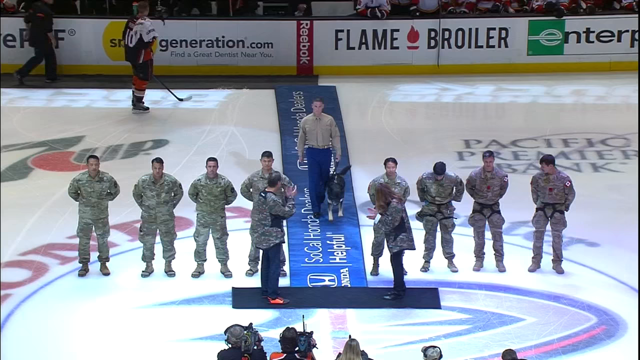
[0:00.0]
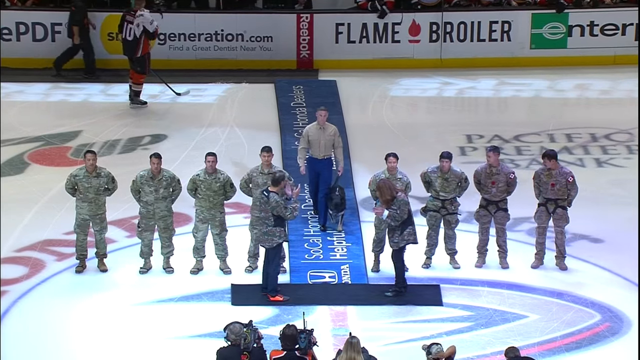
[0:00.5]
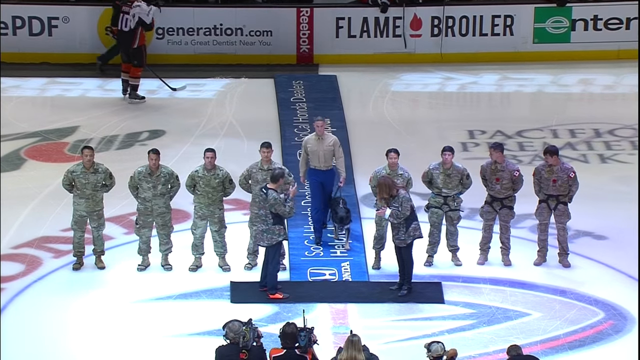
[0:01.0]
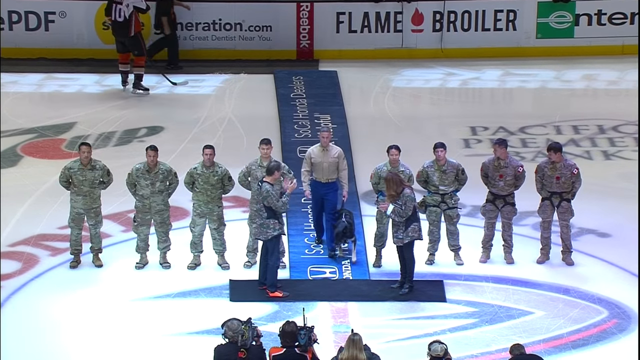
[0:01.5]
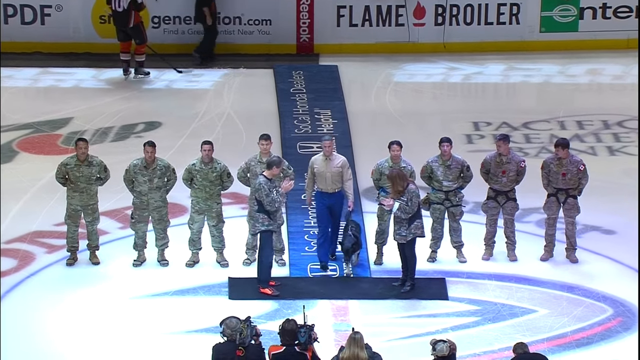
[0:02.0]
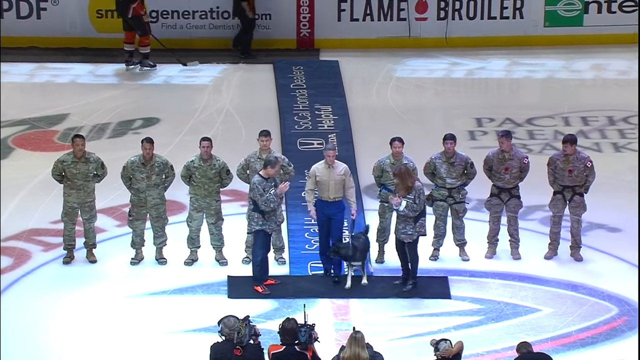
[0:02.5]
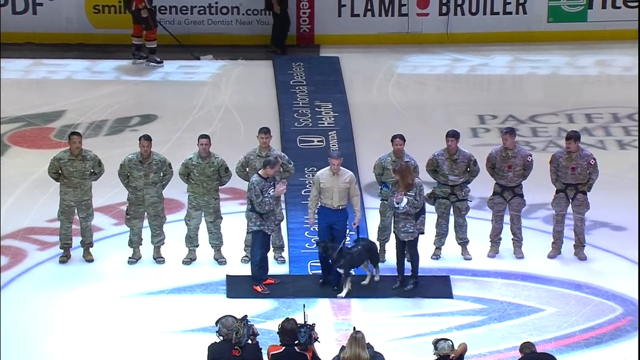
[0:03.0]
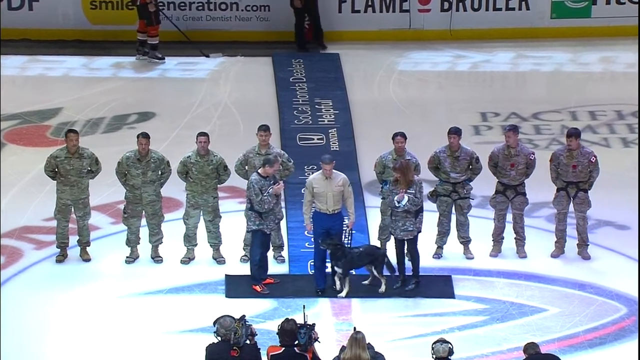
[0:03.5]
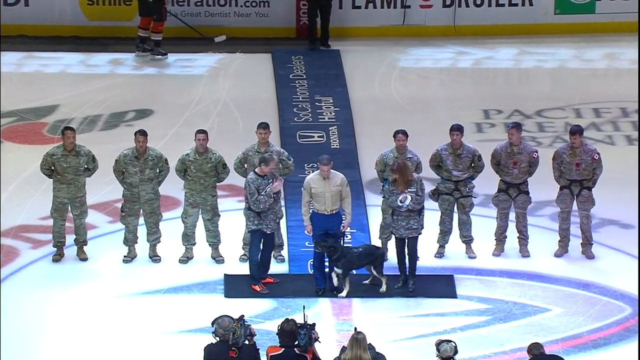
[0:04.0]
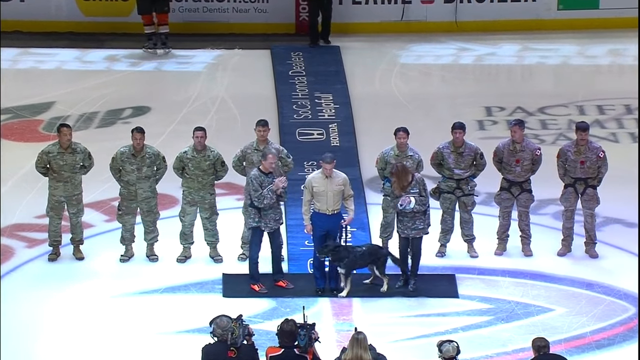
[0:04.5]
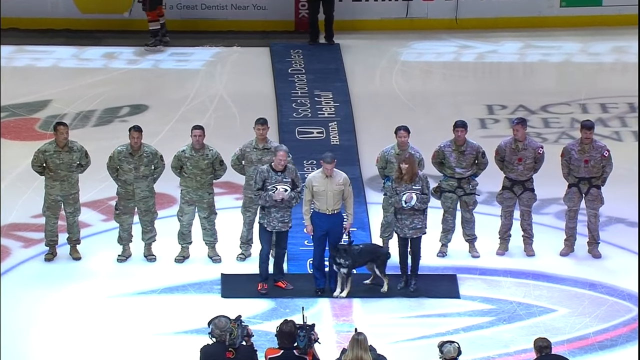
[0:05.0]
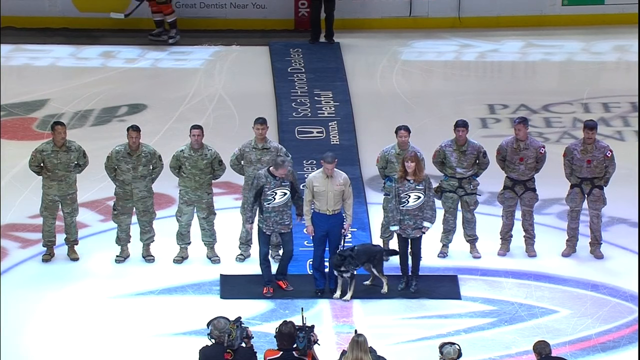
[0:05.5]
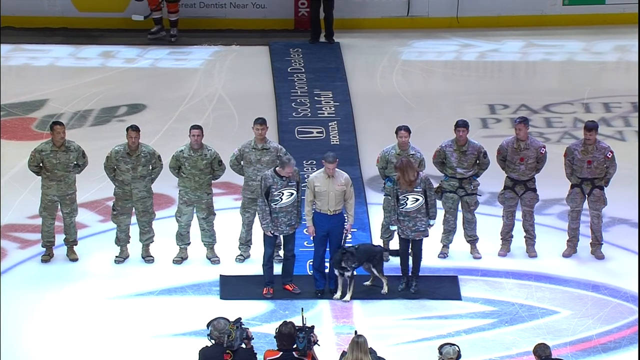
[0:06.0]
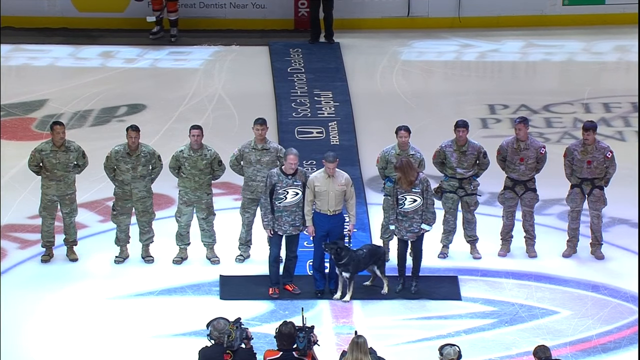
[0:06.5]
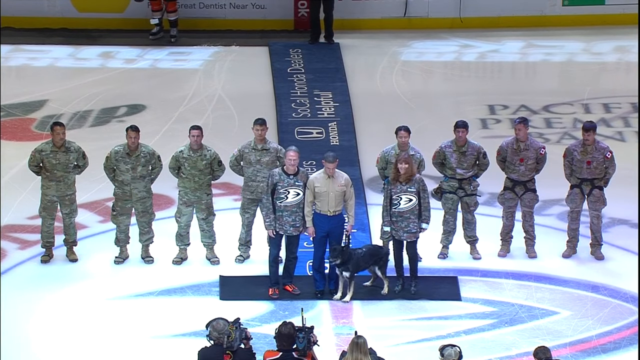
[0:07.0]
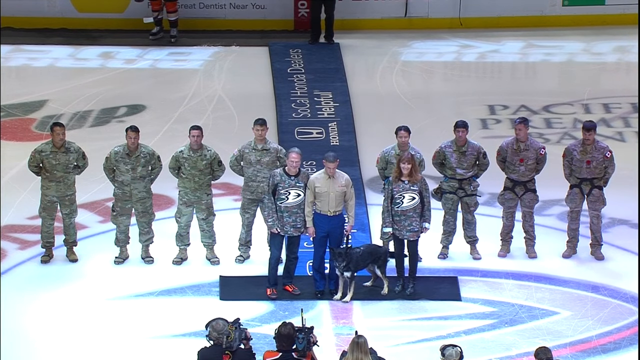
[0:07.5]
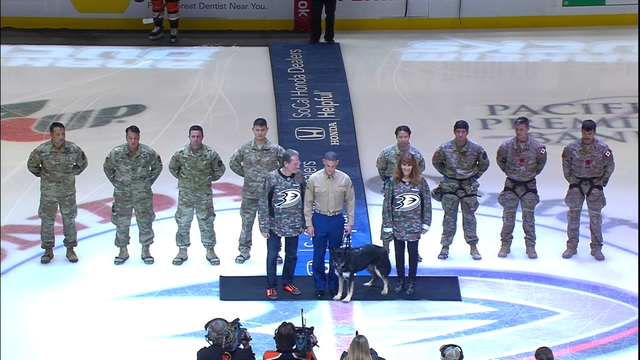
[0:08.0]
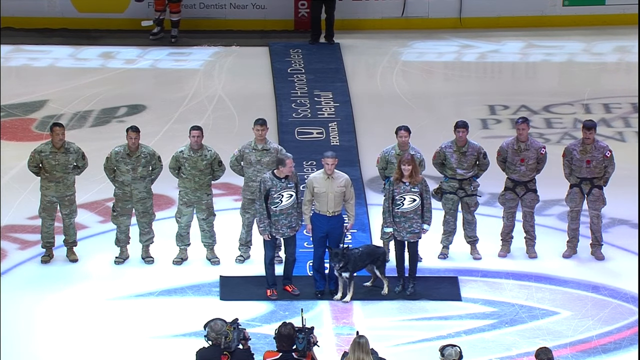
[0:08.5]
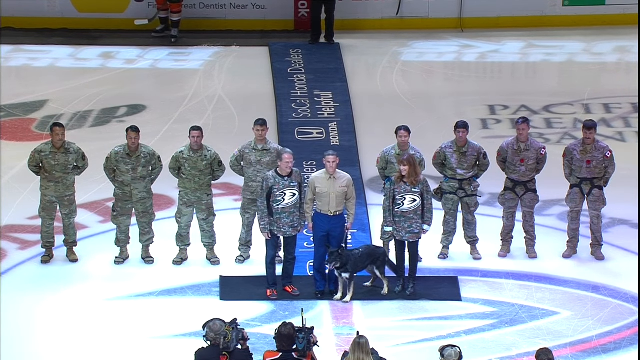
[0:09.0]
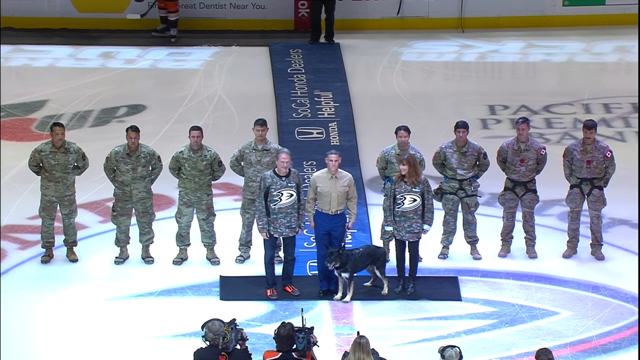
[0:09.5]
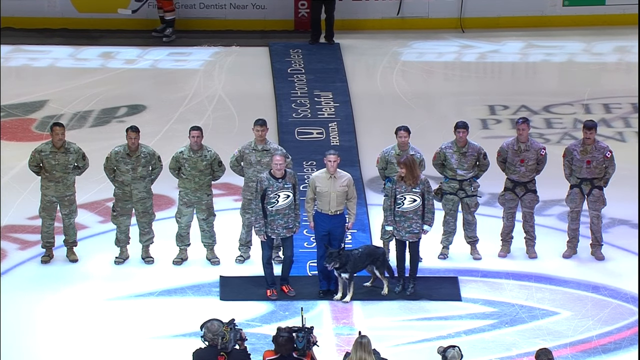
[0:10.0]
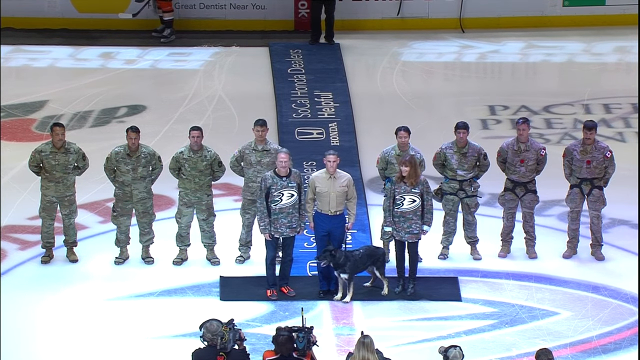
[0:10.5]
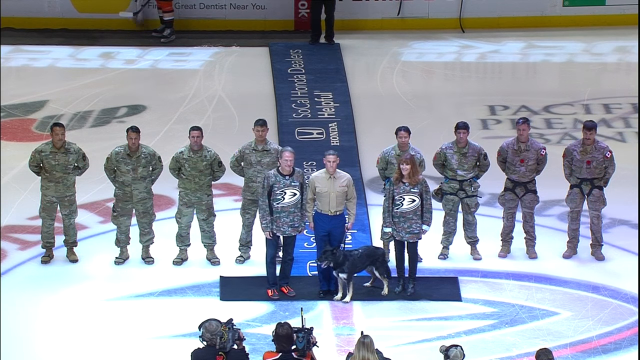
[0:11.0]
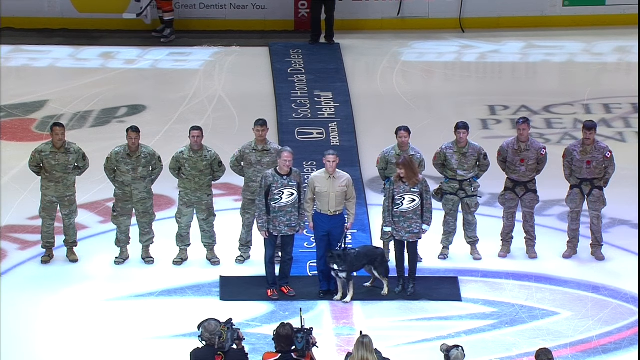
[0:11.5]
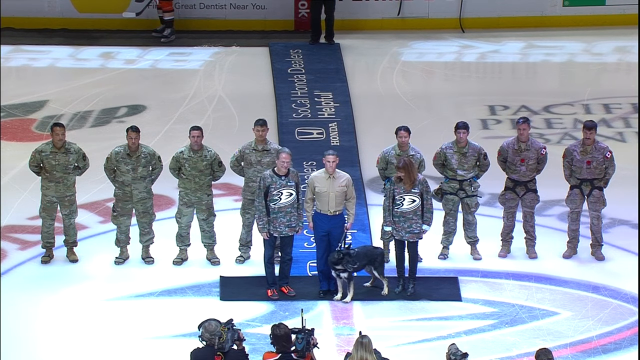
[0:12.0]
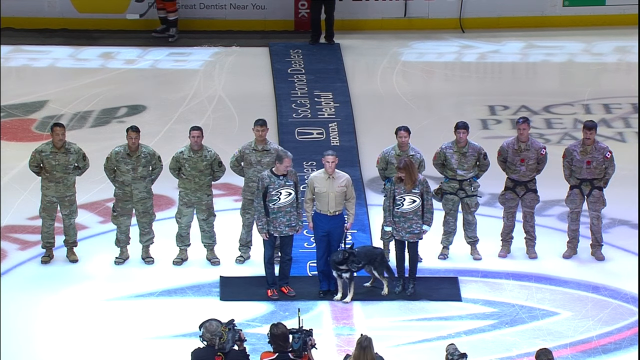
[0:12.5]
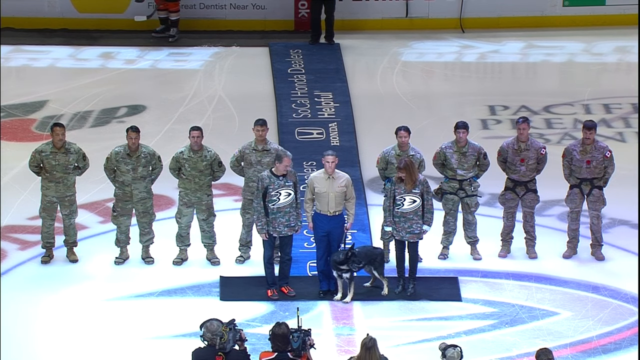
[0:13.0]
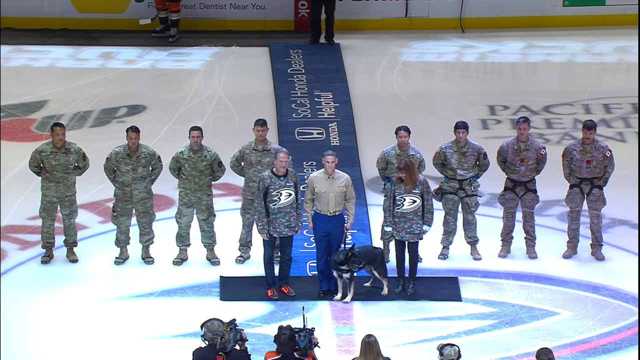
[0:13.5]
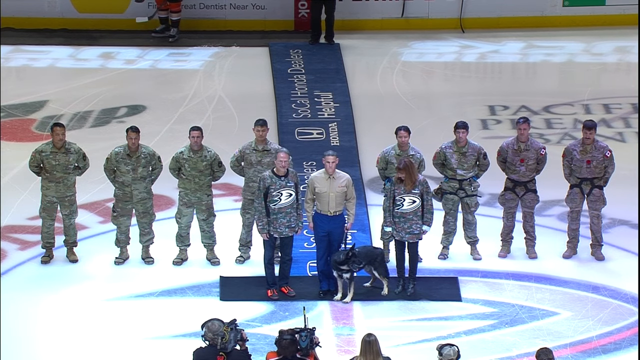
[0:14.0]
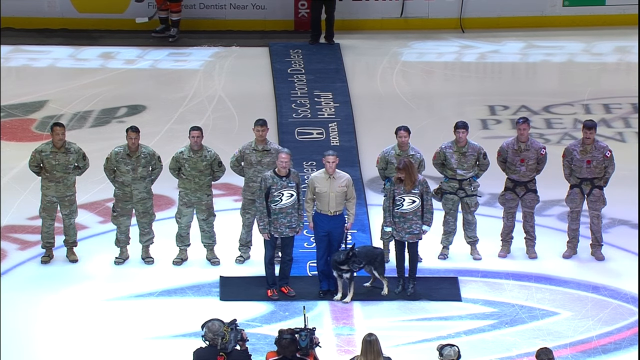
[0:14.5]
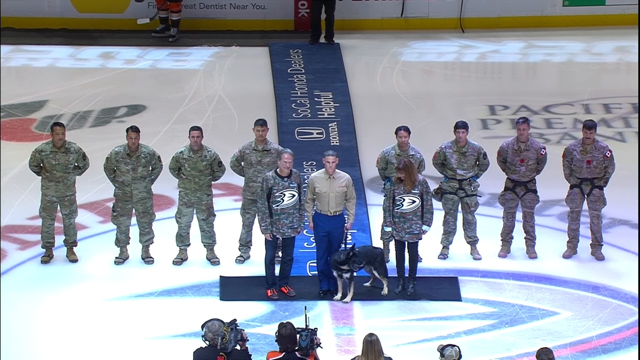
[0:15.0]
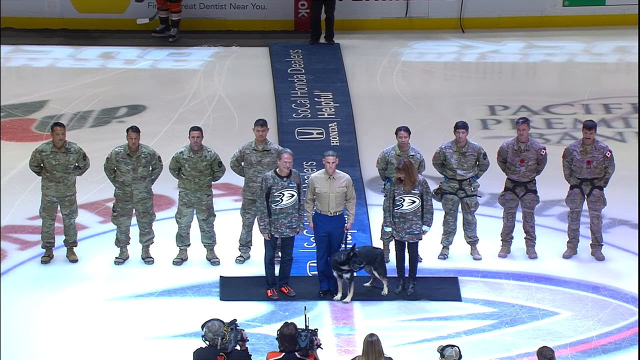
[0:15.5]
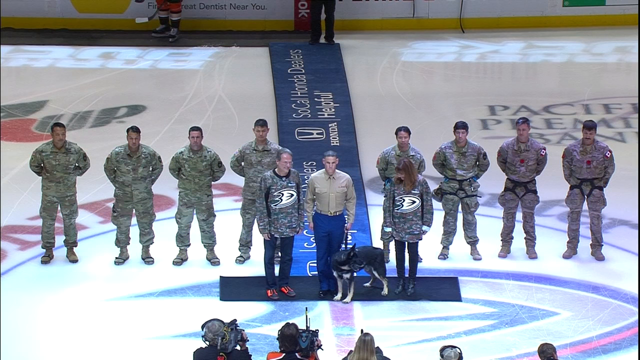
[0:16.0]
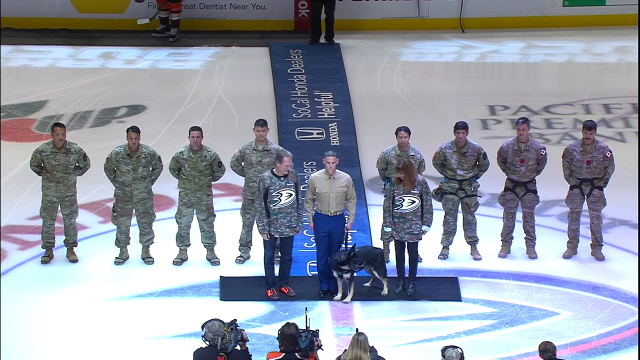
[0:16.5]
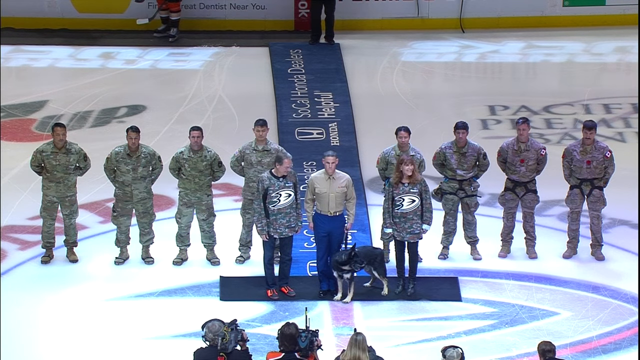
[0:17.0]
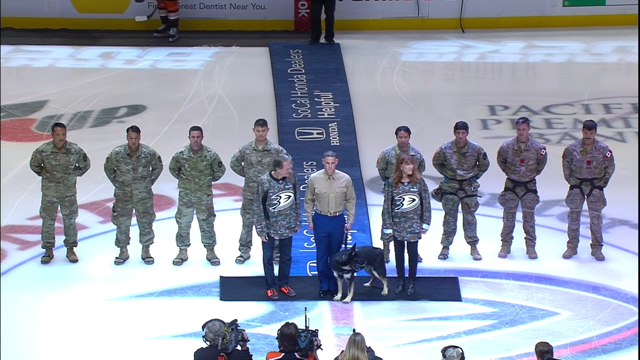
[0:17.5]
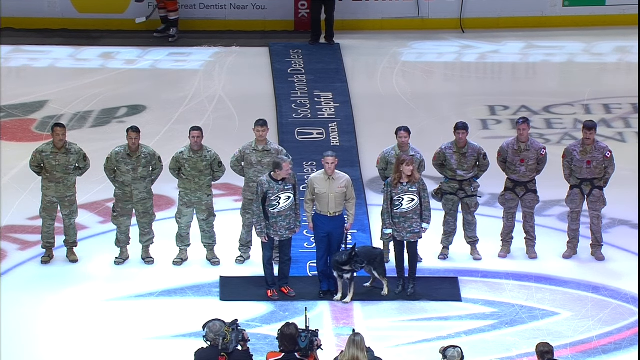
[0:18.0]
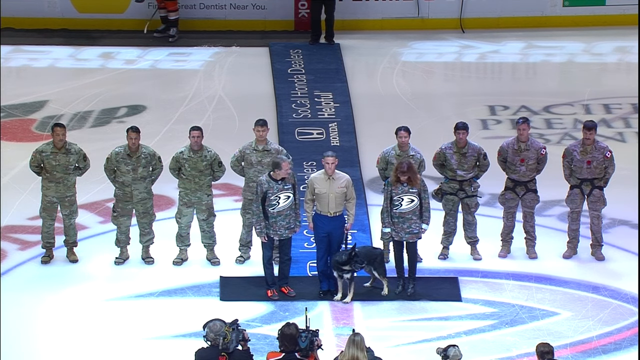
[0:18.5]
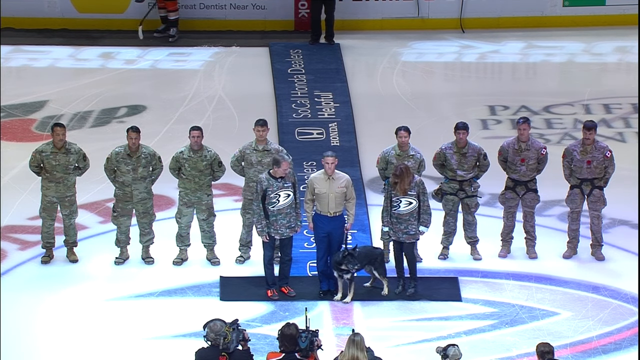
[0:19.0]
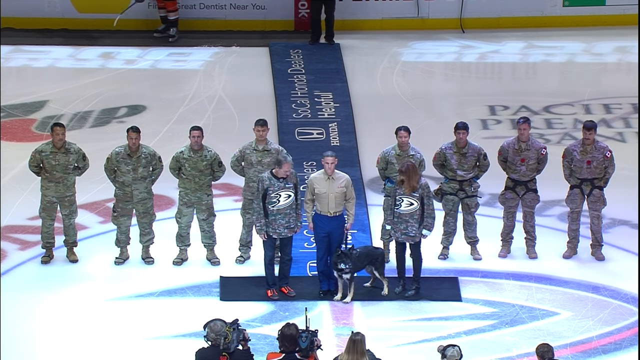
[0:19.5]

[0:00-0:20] An aerial view shows what appears to be a gym floor. Four people fully clad in army clothing are on the left side of the screen and on the right side, with a blue line on the floor between them. A man walks down the middle of the blue line toward the camera, walking a dog on a leash. He wears a tan long-sleeve shirt and blue pants. He steps in front of the eight people in army clothes in the background, and there is one person on each side of him, also wearing an army-colored shirt. The three people pose, standing forward in front of people holding cameras and taking pictures of the group.